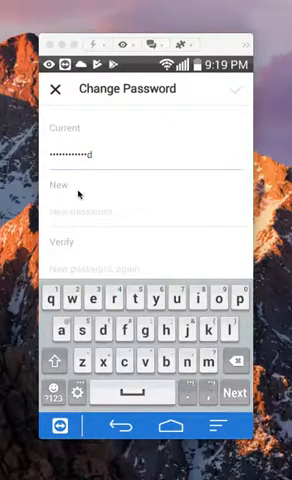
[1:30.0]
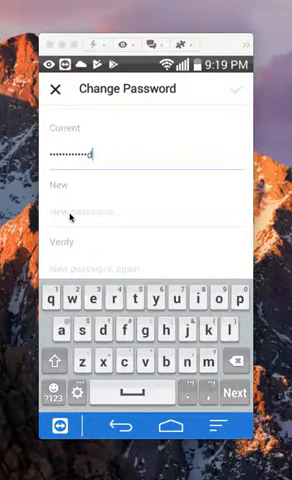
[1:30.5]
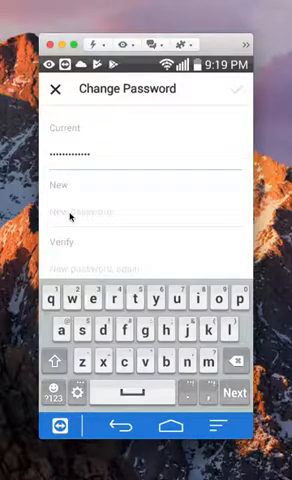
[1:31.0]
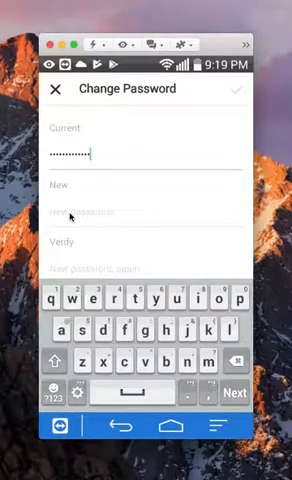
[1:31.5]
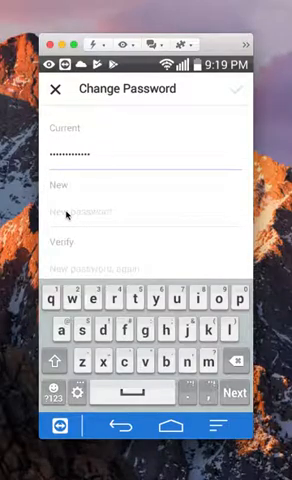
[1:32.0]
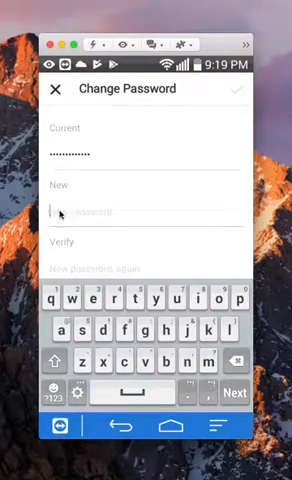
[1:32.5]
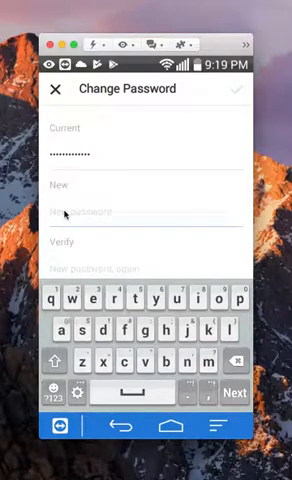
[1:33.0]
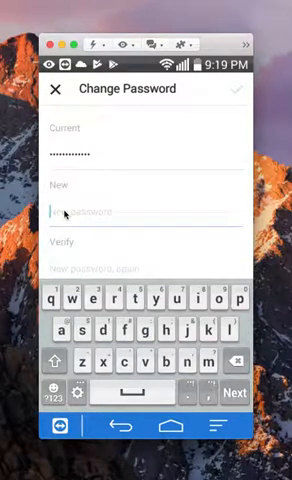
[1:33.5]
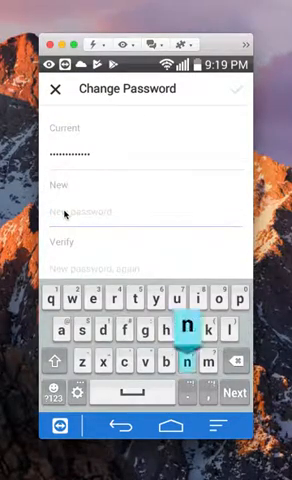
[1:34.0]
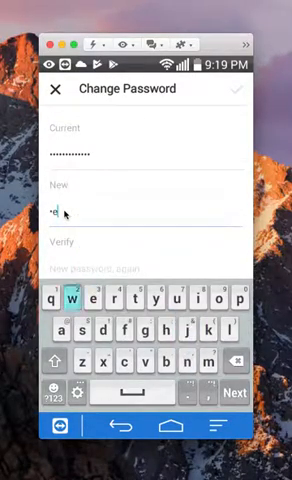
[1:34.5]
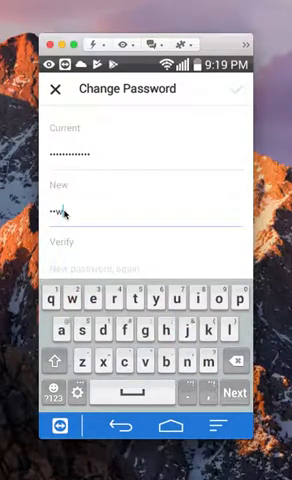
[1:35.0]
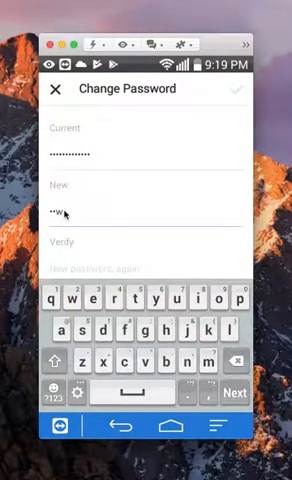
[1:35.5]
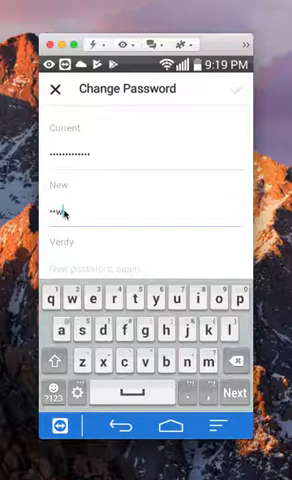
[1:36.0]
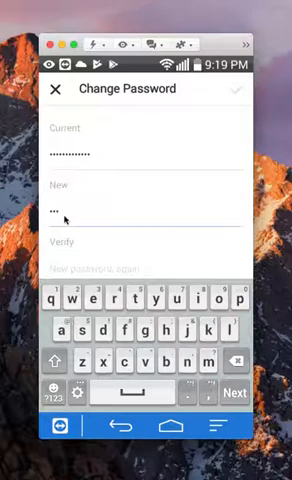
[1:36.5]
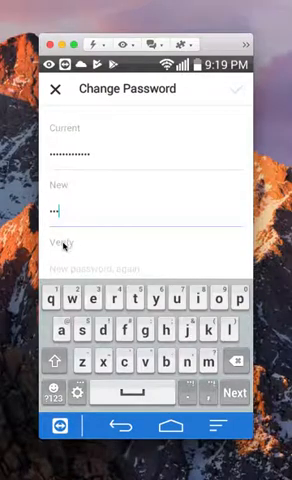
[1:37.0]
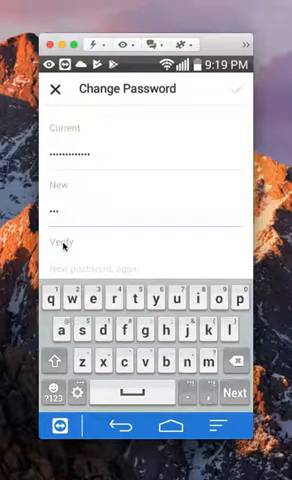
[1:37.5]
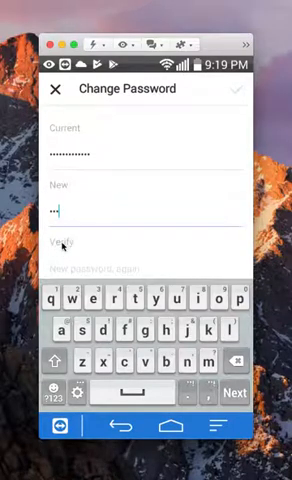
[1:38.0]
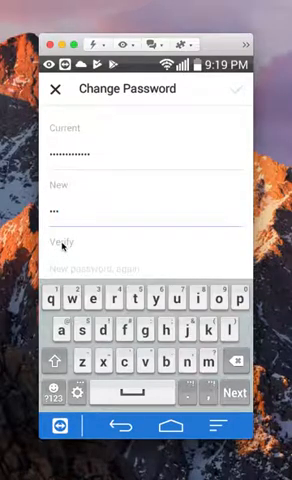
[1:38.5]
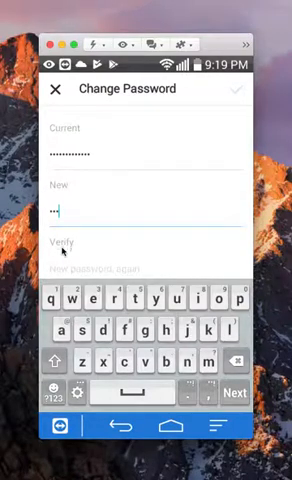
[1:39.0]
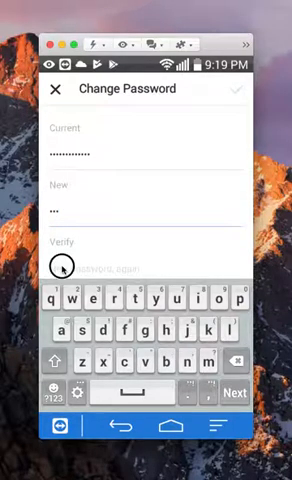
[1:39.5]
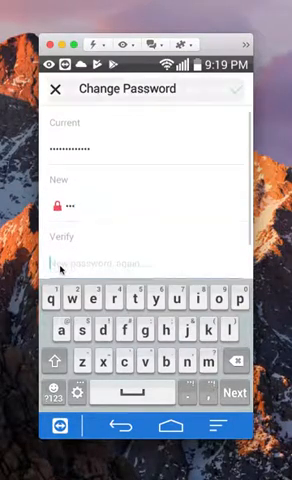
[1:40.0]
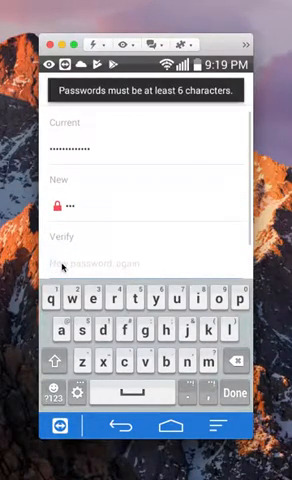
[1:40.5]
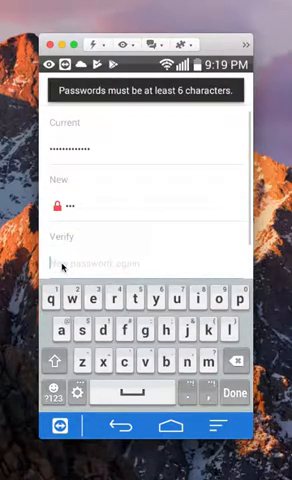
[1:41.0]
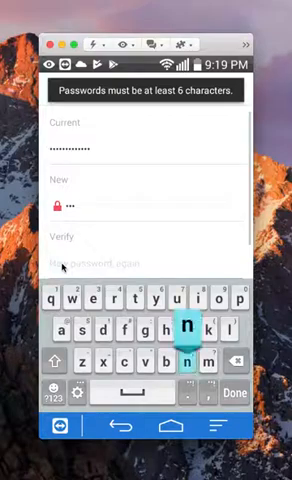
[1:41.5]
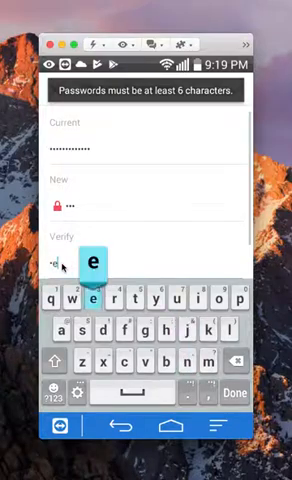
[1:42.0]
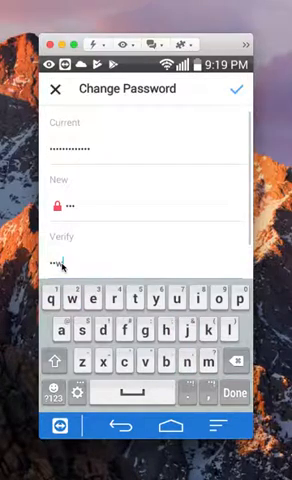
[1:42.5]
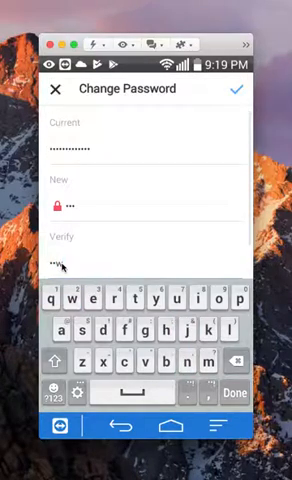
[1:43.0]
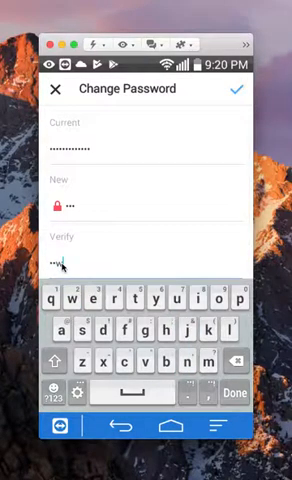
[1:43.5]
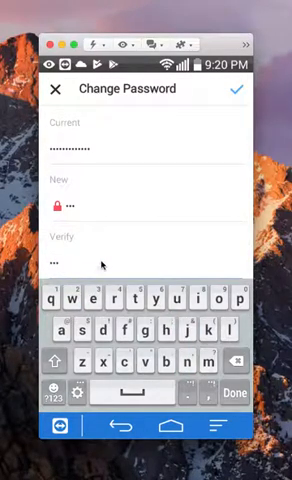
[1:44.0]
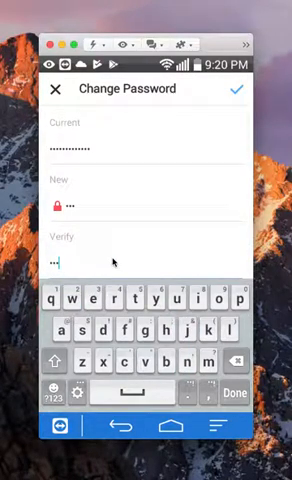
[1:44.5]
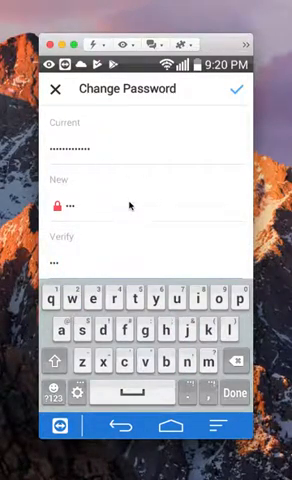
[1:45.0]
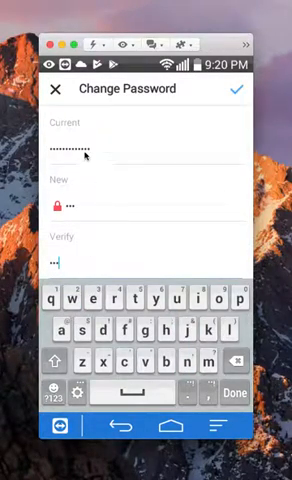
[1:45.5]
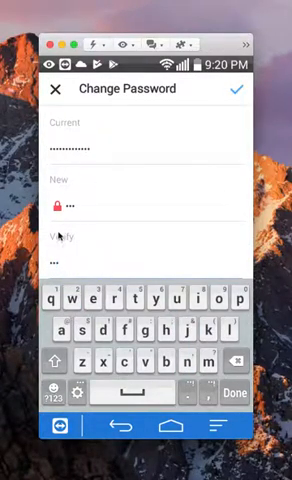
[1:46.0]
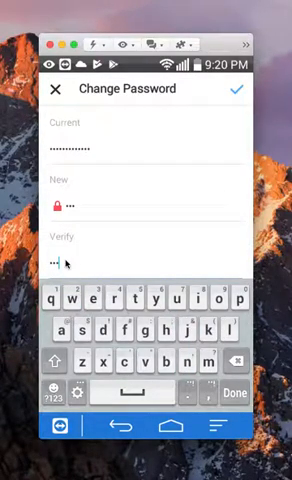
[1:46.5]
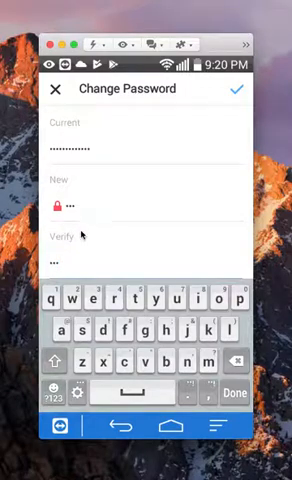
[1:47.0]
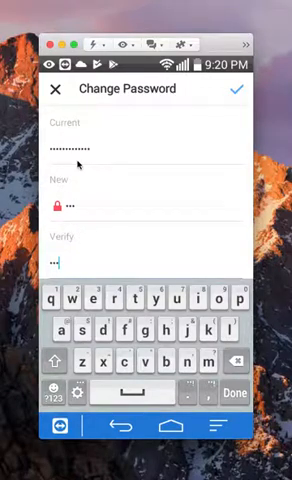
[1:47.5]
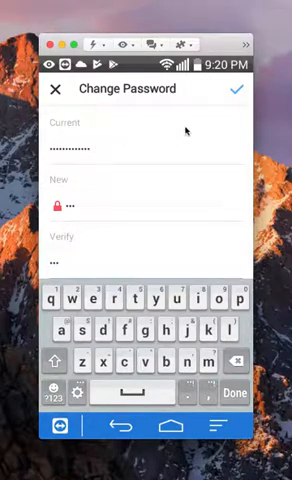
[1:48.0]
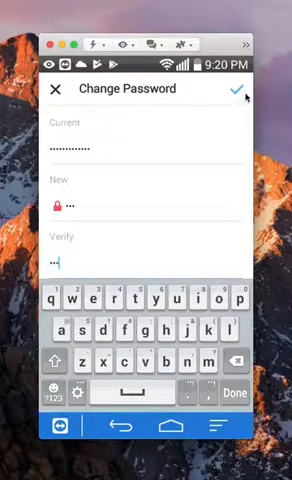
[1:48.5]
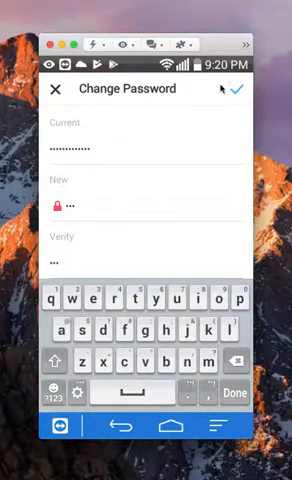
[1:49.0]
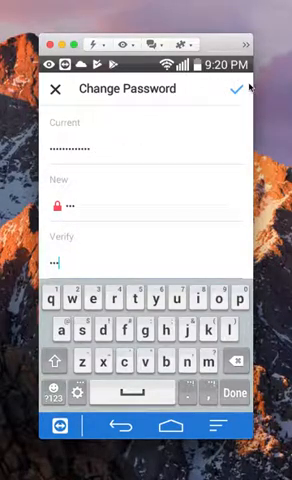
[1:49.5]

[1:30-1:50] On the password change screen, a current password is typed into the current password field, with a keyboard at the bottom of the screen. The new password field is then selected and typed into, and a message appears that reads "Passwords must be at least six characters". A lock button appears next to the typed new password. Typing then begins in the Verify field, and a blue checkbox appears, which the cursor circles and then selects.